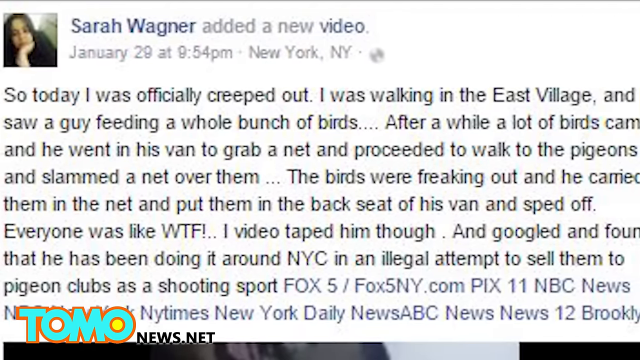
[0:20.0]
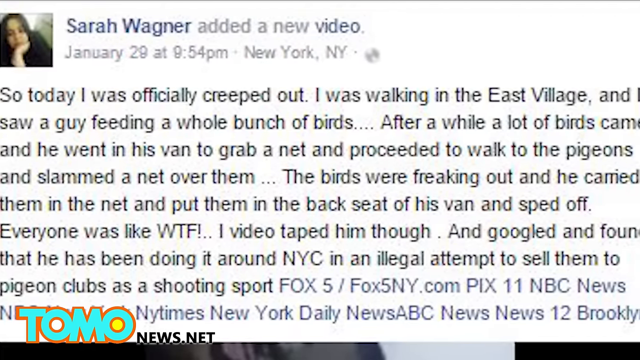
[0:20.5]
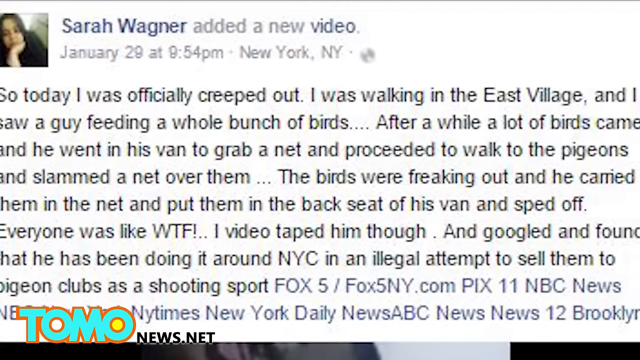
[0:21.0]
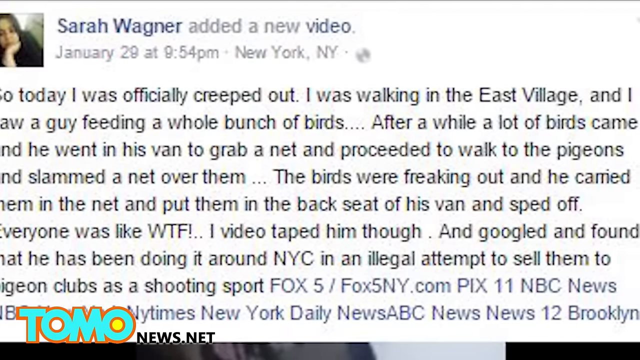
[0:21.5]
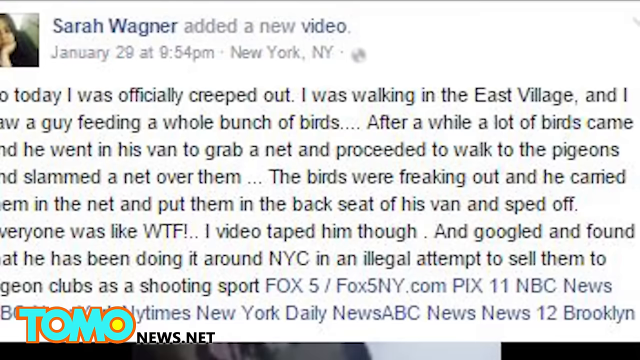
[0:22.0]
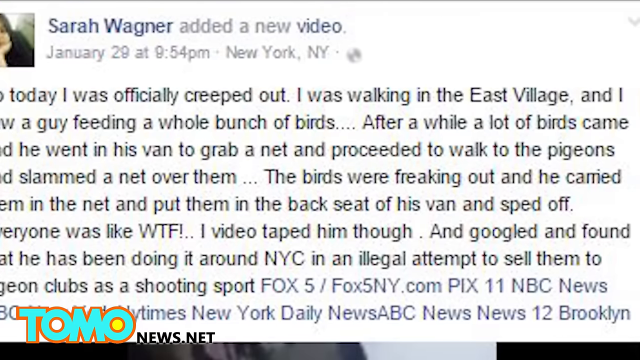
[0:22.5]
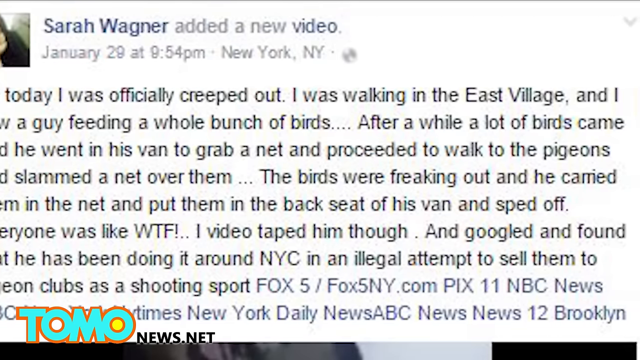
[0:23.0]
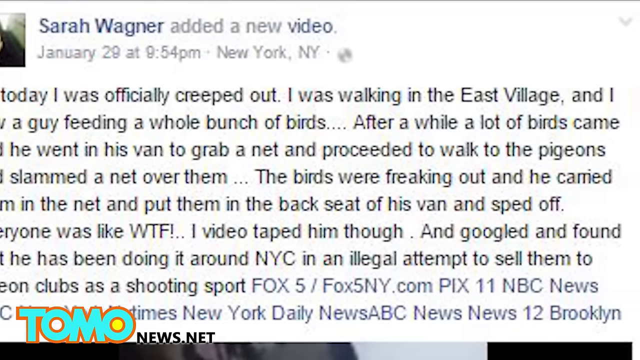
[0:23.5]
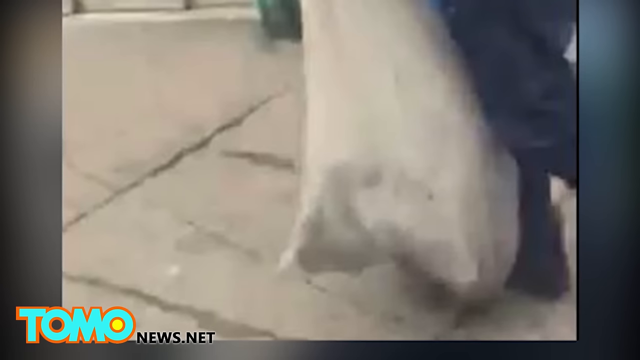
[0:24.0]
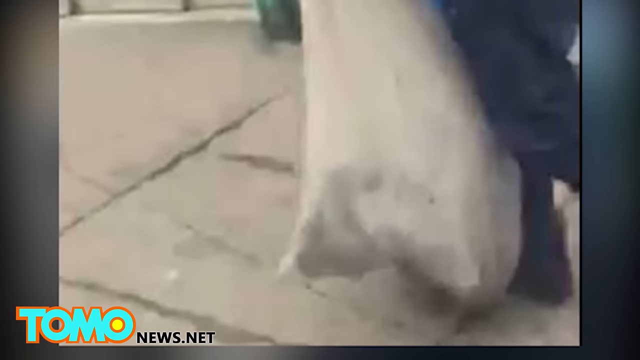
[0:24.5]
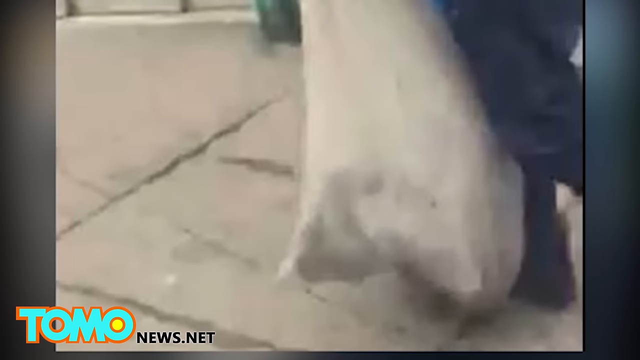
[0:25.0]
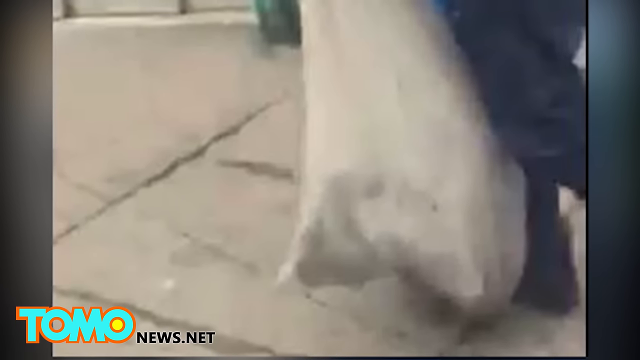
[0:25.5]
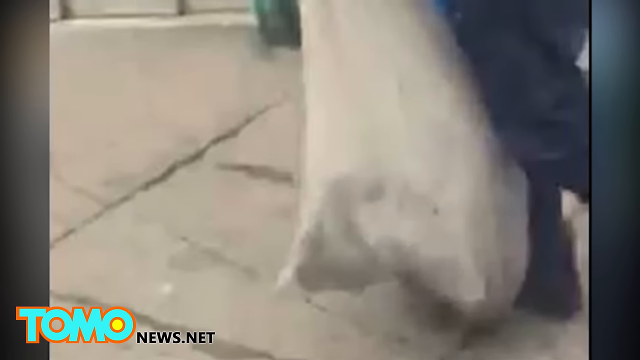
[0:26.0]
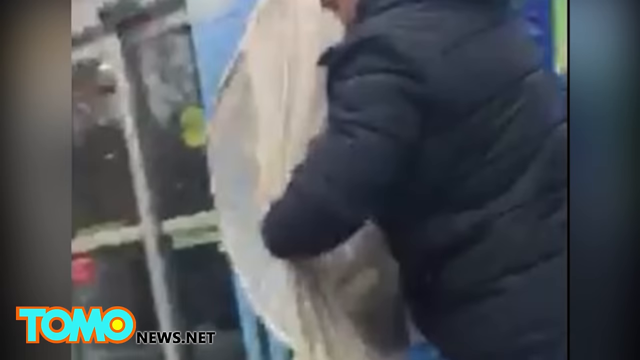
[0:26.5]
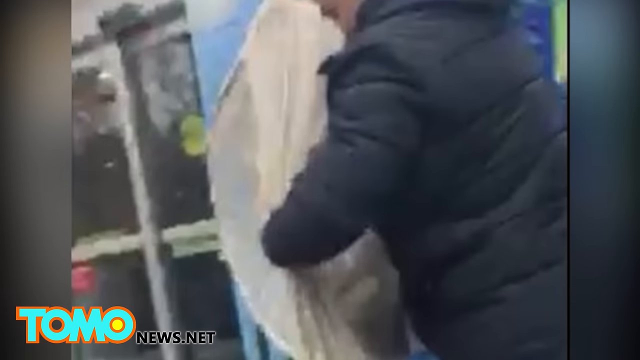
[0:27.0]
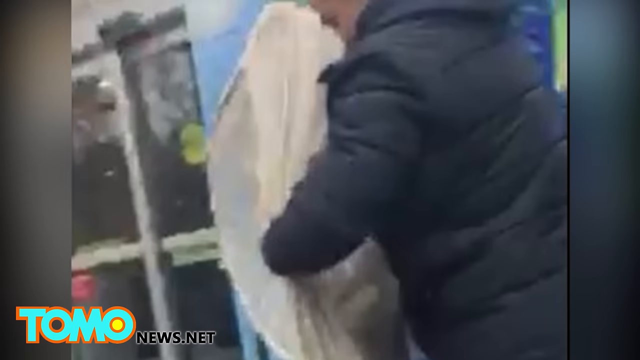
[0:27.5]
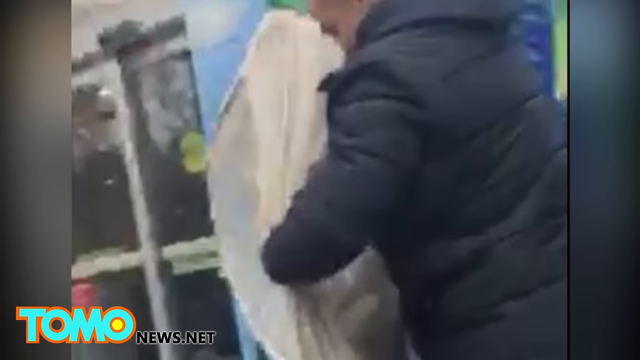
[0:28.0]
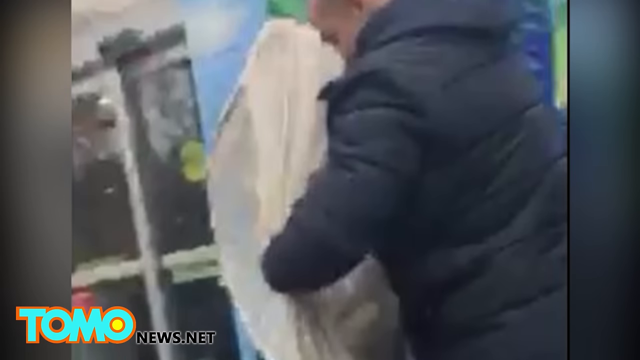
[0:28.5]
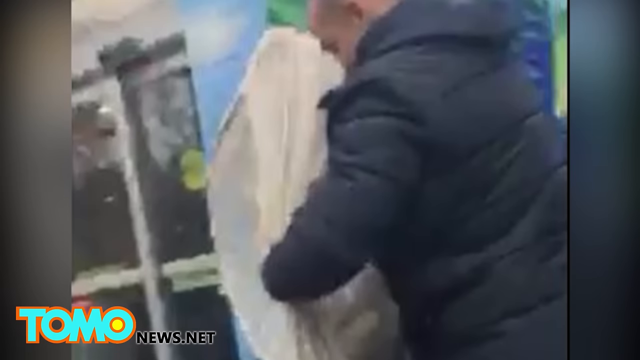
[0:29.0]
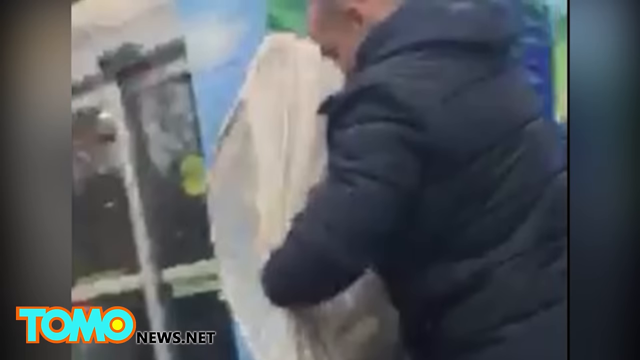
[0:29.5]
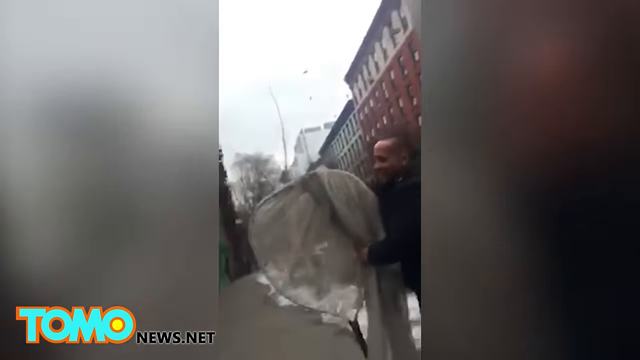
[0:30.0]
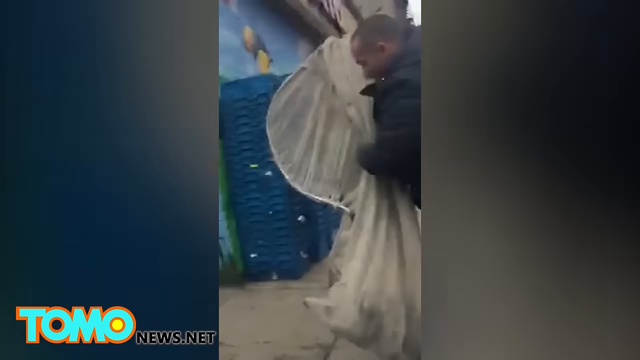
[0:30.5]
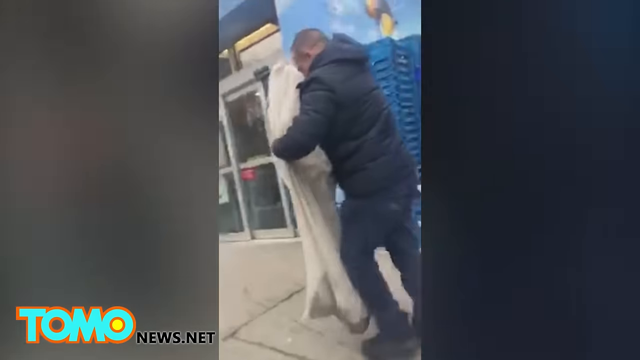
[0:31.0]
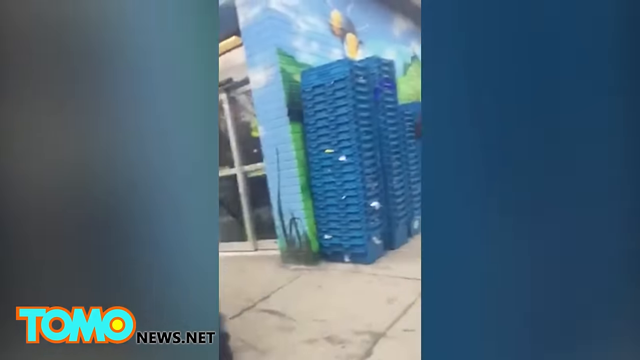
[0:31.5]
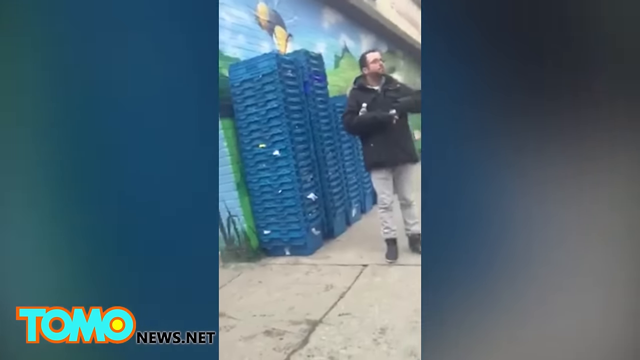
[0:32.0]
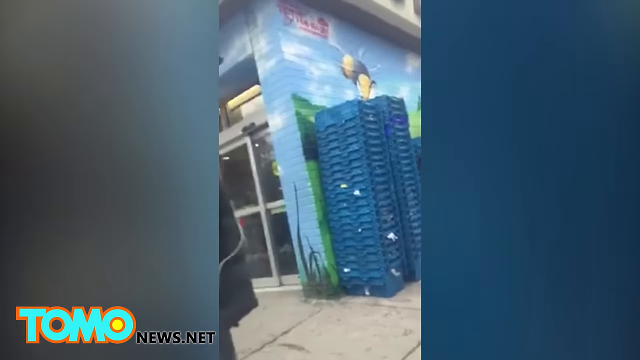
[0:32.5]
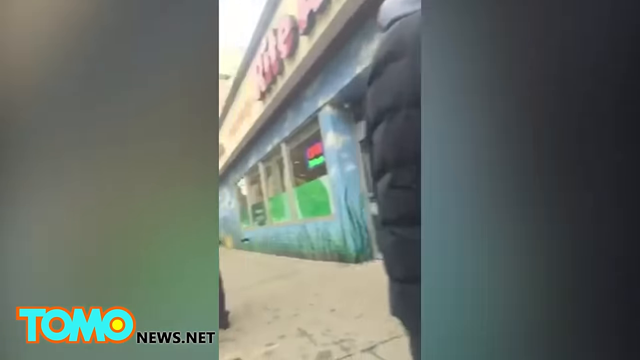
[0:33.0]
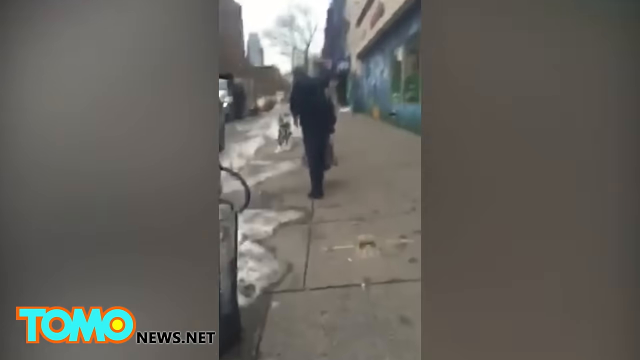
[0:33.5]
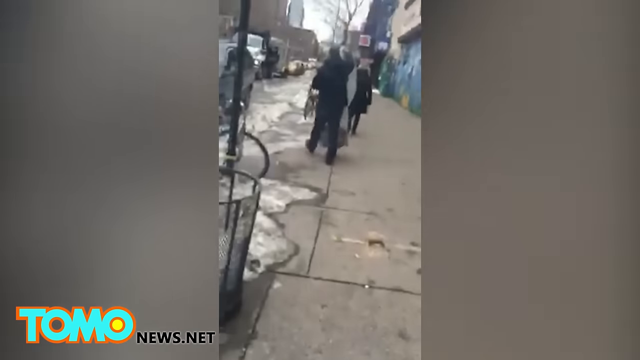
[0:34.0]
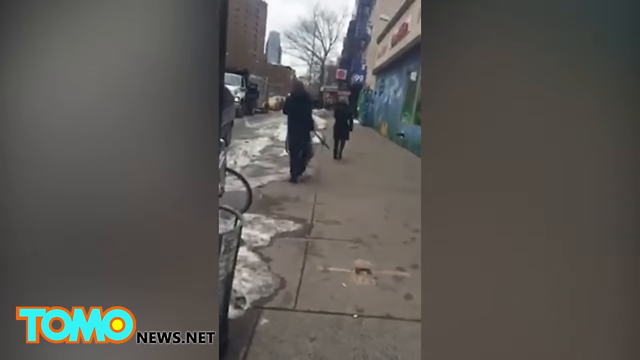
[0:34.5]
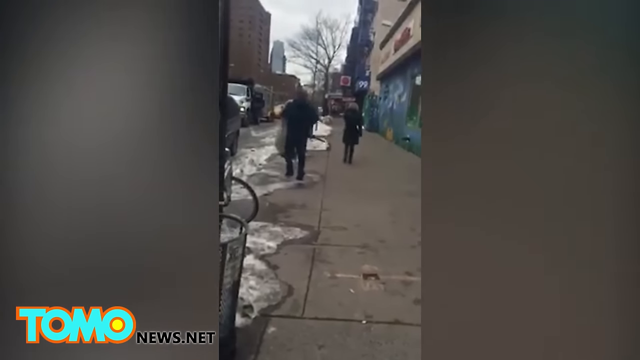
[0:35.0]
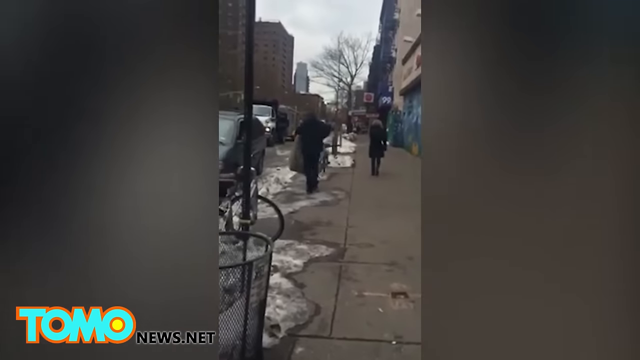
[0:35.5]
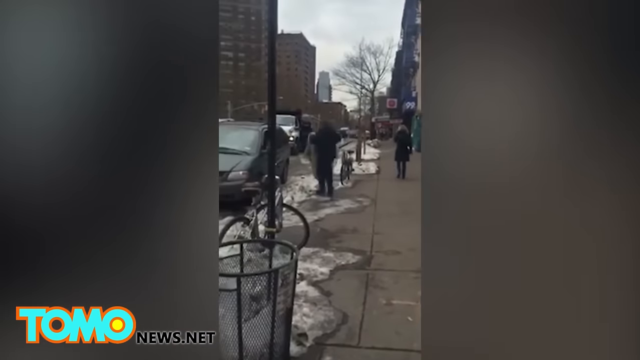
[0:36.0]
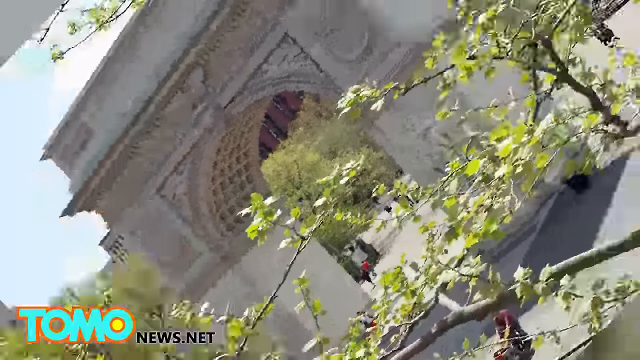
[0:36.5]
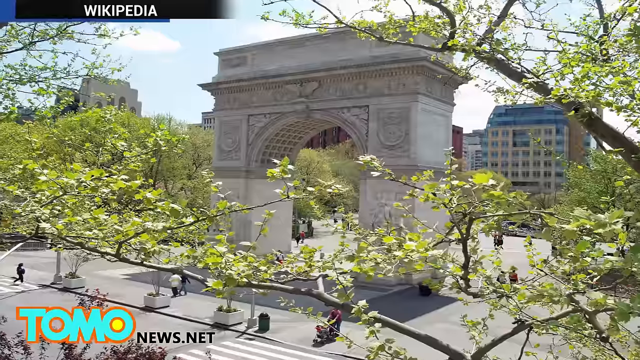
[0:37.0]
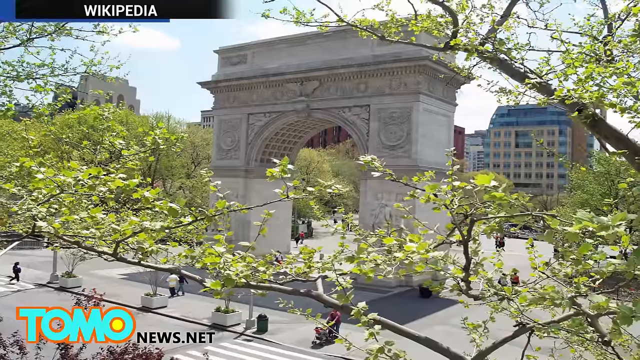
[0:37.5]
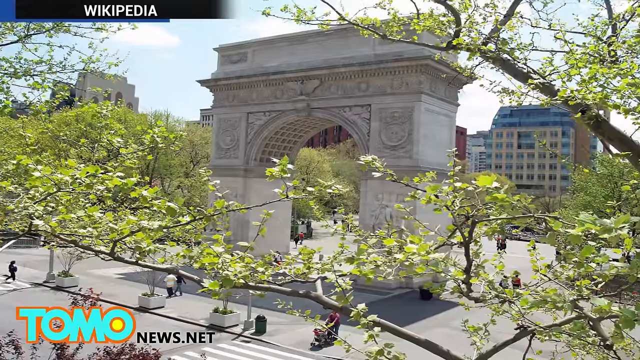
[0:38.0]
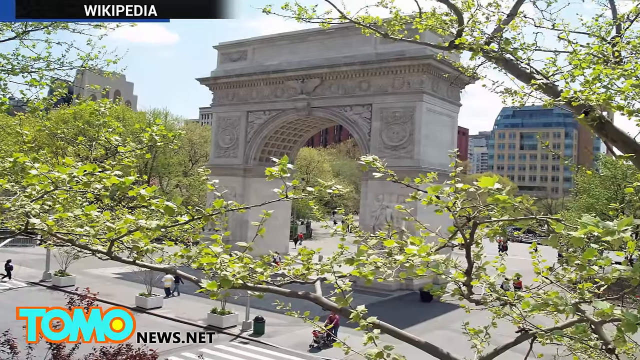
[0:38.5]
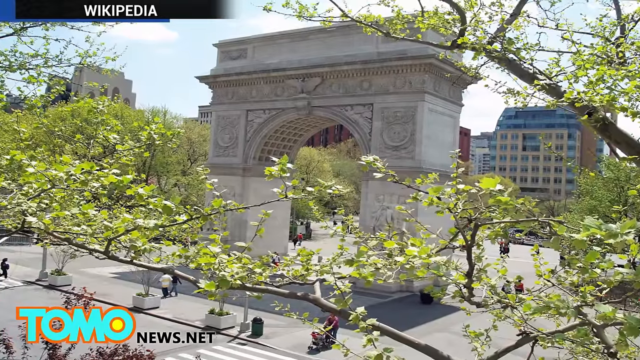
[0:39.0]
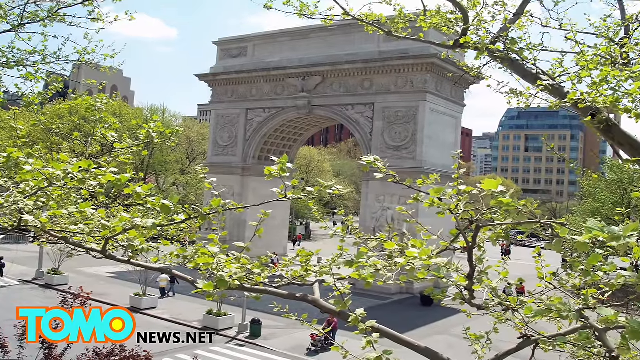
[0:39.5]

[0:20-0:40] The Facebook post by Sarah Wagner is shown, with a profile picture of her with her hand on her chin. The post was posted on January 29th at 9:54pm from New York, New York, and reads: "so today as I was officially creeped out, I was walking in the East Village and I saw a guy feeding a whole bunch of birds. After a while, a lot of birds came and he went in his van to grab a net and proceeded to walk to the pigeons and slammed a net over them. The birds were freaking out and he carried them in the net and put them in the backseat of his van and sped off. Everyone was like WTF. I videotaped him though and Googled and found that he has been doing it around New York City in an illegal attempt to sell them to pigeon clubs as a shooting sport." The screen goes from left to right across the post. Then a zoomed-in image of the burlap sack holding the pigeons is shown before the camera moves up to the top of the picture, which shows the man in the black jacket, along with a vertical video of the man holding the sack of pigeons and carrying it to his van. A flip follows, and a Wikipedia image of the Washington Square arch is shown, continually rotating.